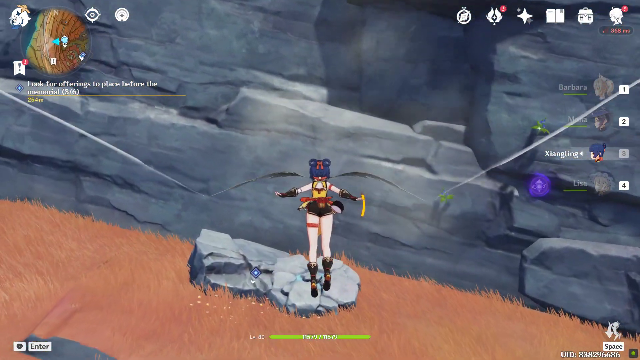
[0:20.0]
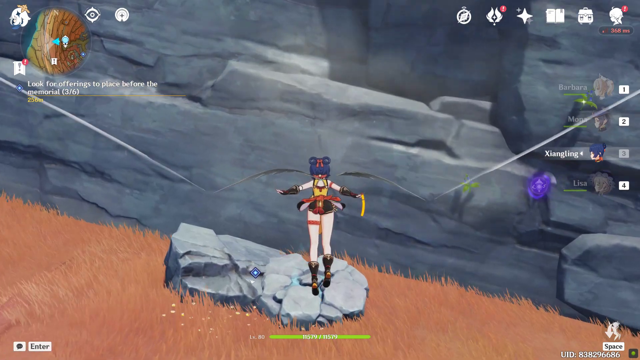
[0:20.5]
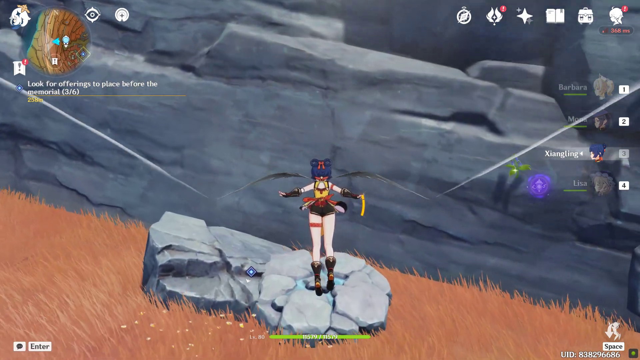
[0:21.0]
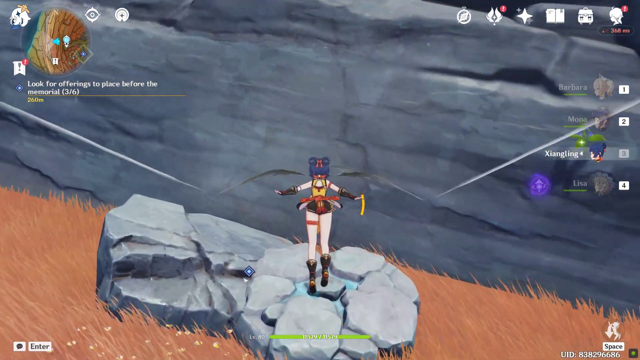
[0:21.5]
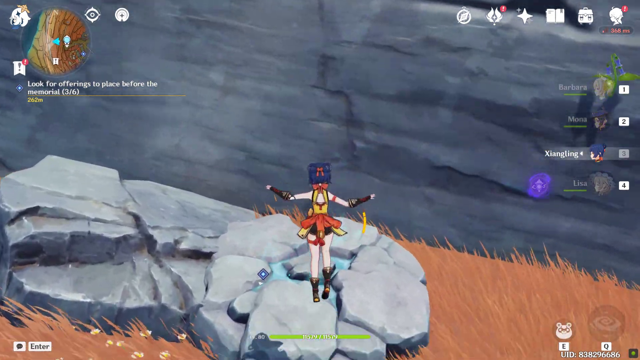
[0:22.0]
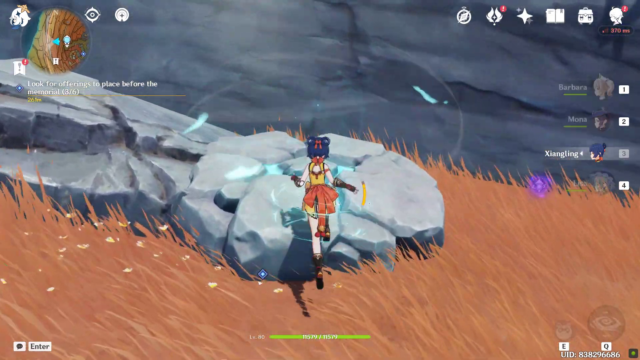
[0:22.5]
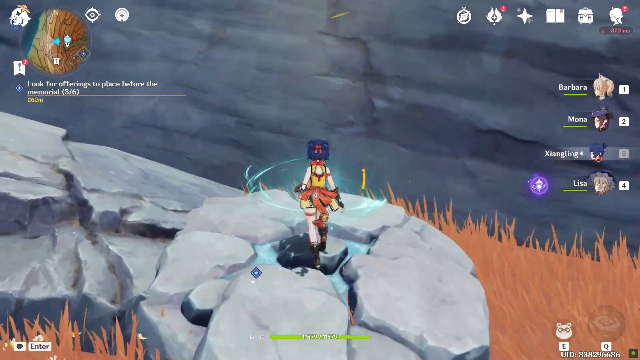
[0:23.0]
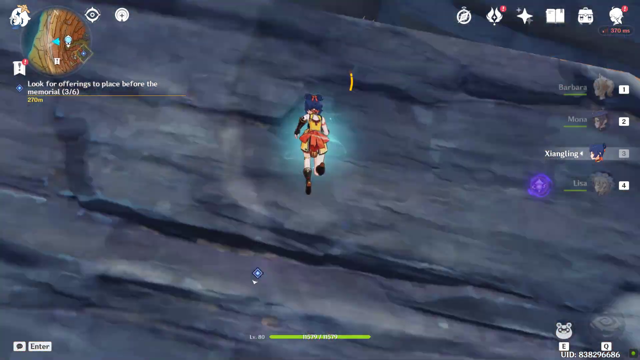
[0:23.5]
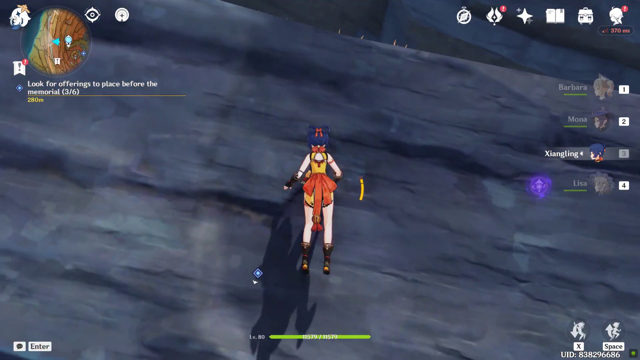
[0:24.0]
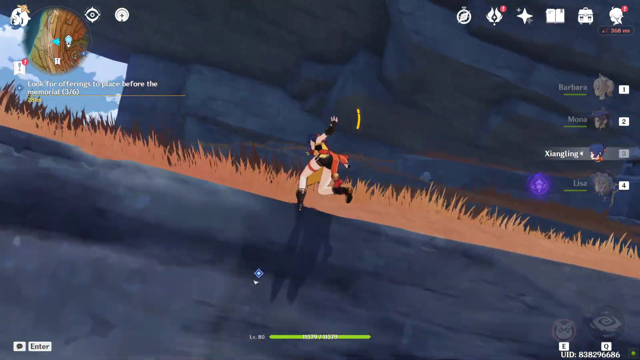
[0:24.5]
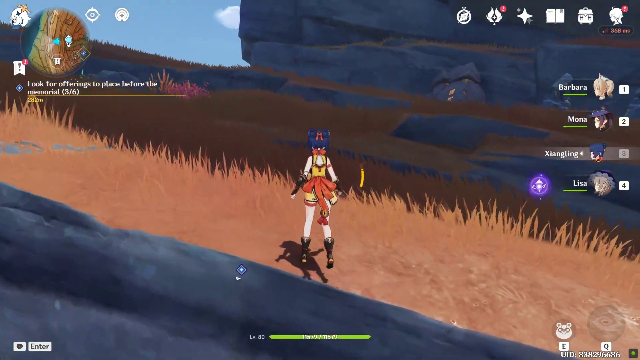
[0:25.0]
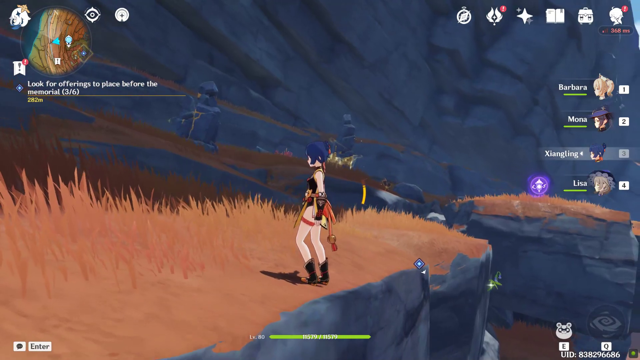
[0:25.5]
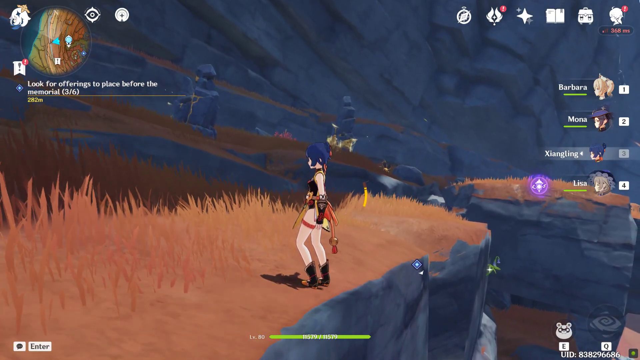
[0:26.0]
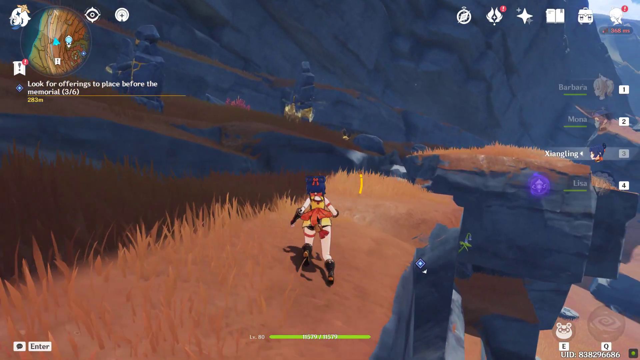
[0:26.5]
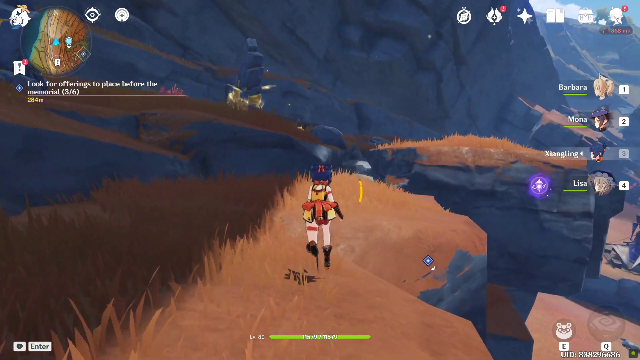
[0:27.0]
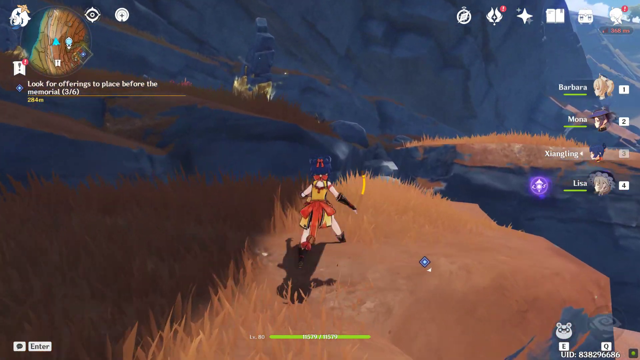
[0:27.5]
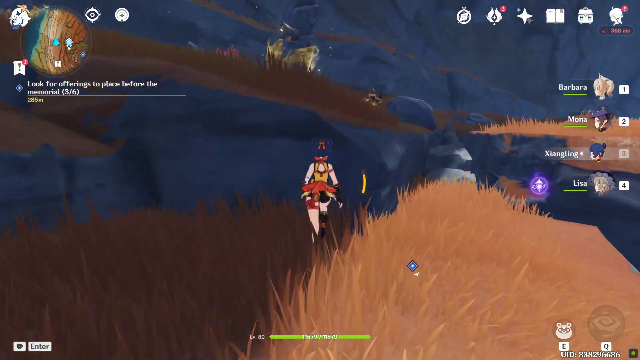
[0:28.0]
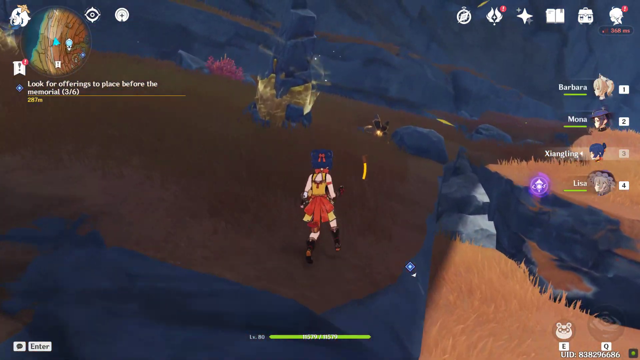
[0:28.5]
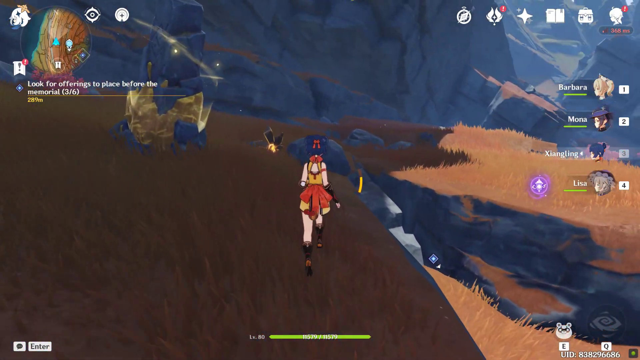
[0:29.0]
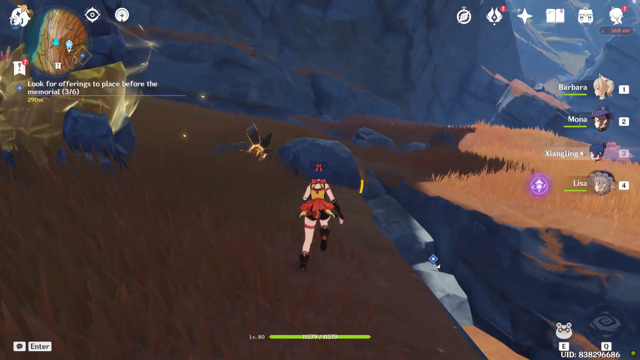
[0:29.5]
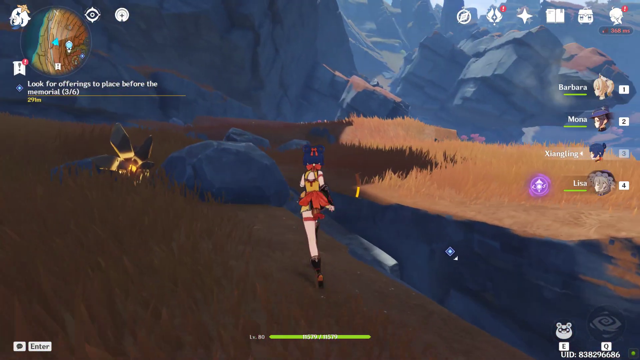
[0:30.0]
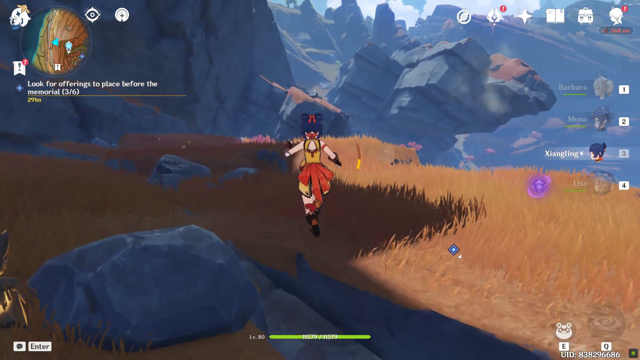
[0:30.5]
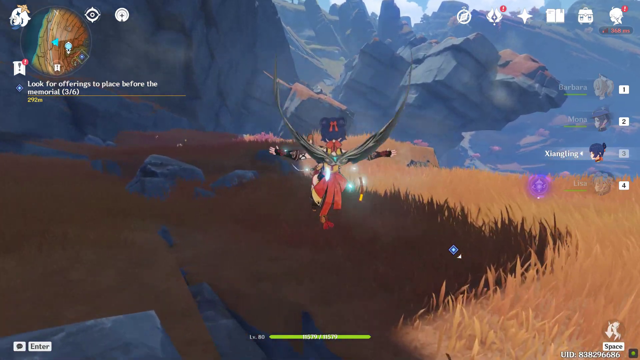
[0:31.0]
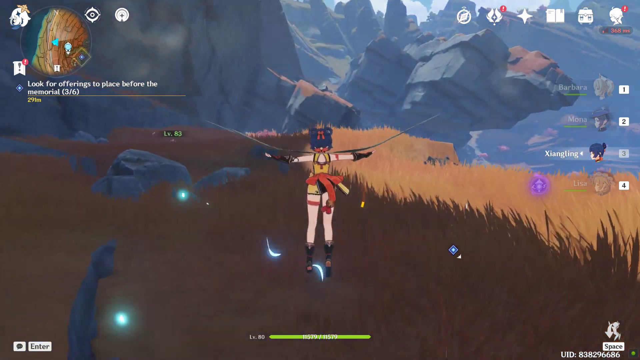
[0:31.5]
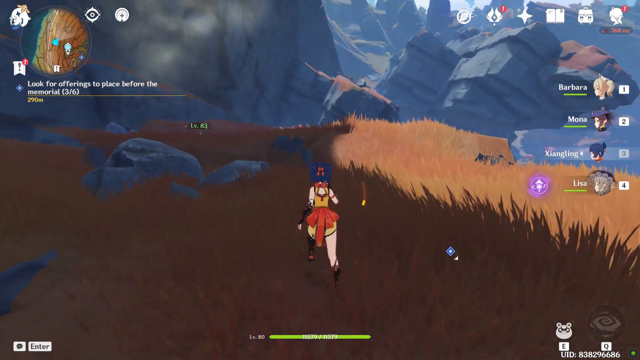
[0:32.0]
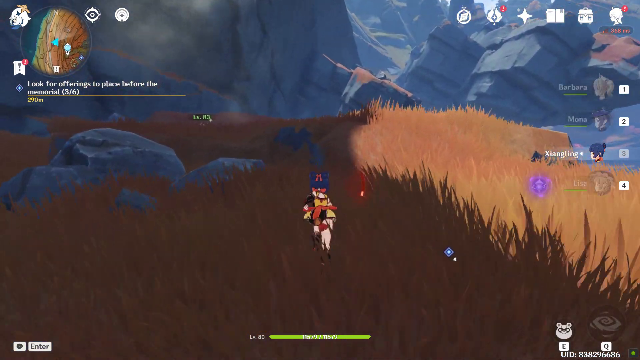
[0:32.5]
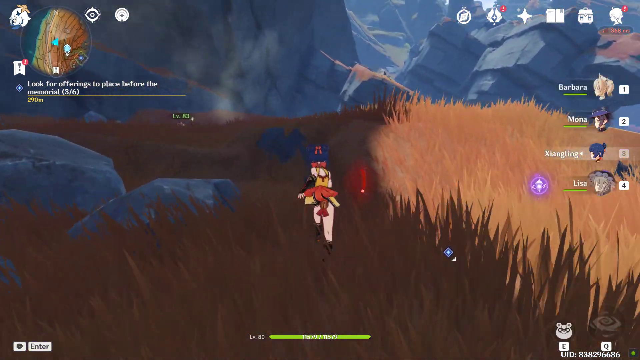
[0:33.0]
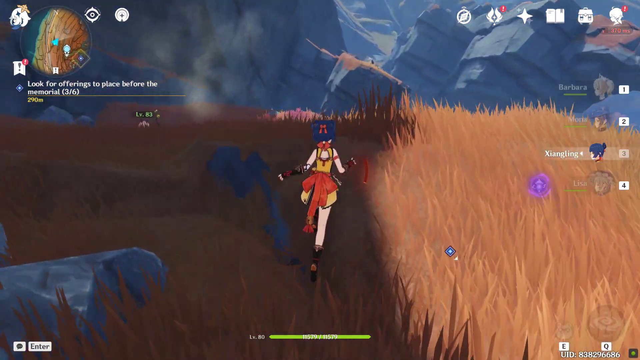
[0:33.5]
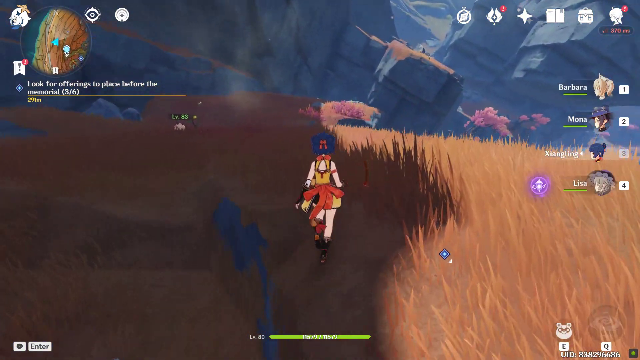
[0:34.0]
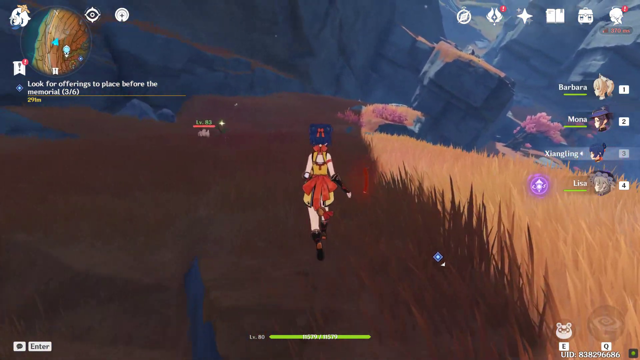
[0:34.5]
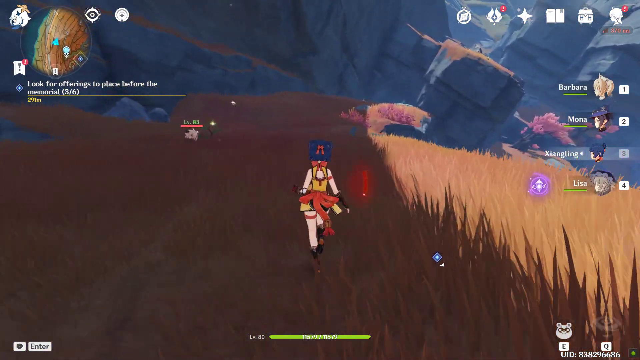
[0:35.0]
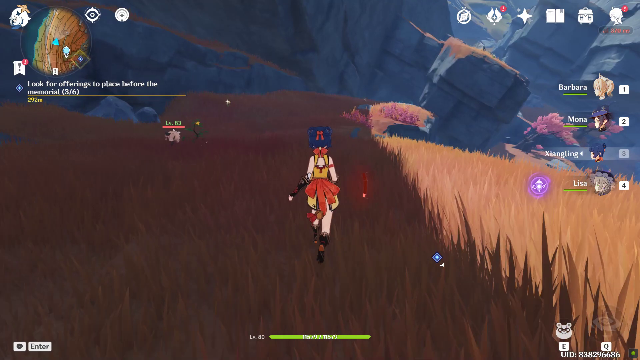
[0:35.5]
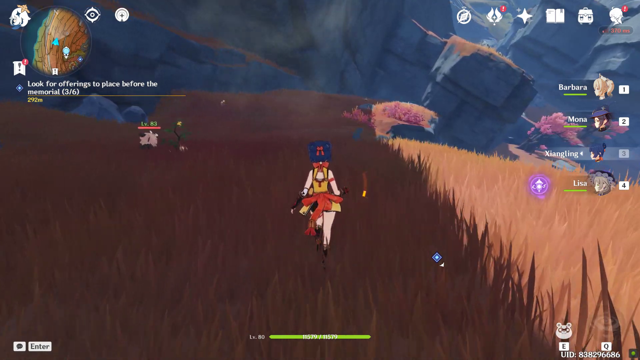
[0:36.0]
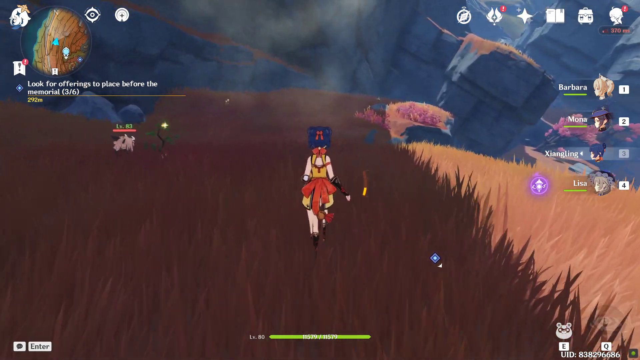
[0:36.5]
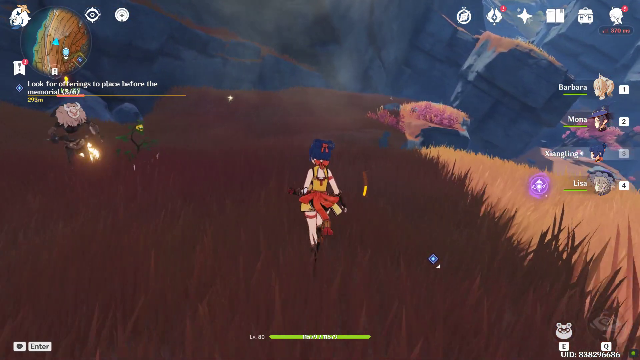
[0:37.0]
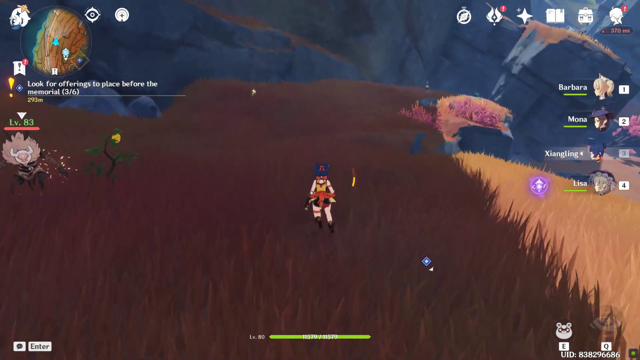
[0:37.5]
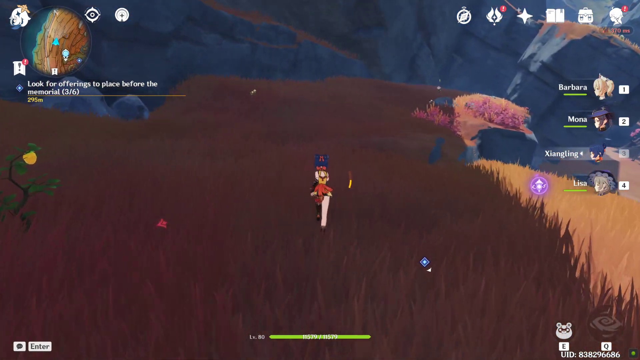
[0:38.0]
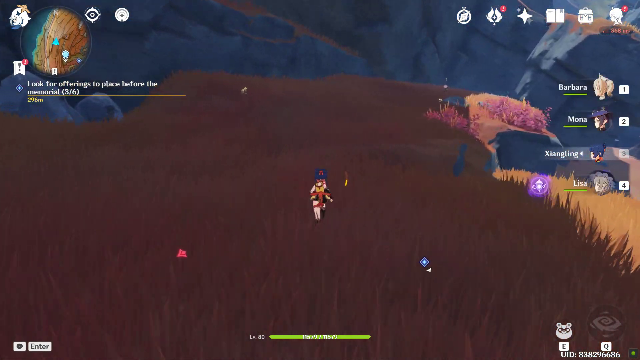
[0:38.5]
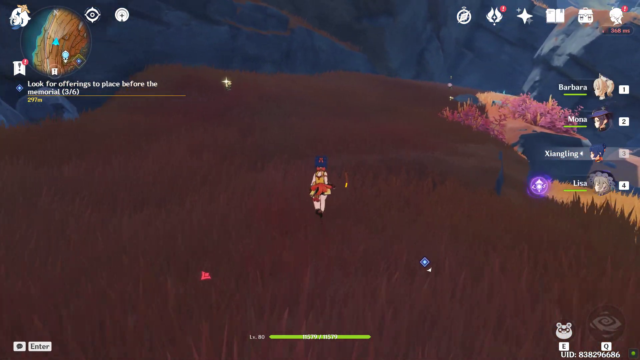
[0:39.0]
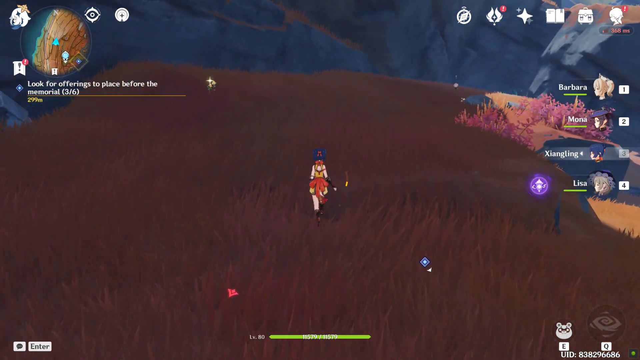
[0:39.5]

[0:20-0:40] Gameplay begins with a girl character with blue hair. She wears mid-calf boots, an extremely short outfit that looks like hot pants with some sort of skirt flying in the wind, a sleeveless yellow top of some kind, and gloves that reach up to her elbows. She is flying, lands on a rock, then jumps very high up a cliff and lands on what looks like reddish-brown grass. She runs and jumps across the same kind of terrain. Black wings pop up when she wants to fly a little, and she keeps running across the terrain.